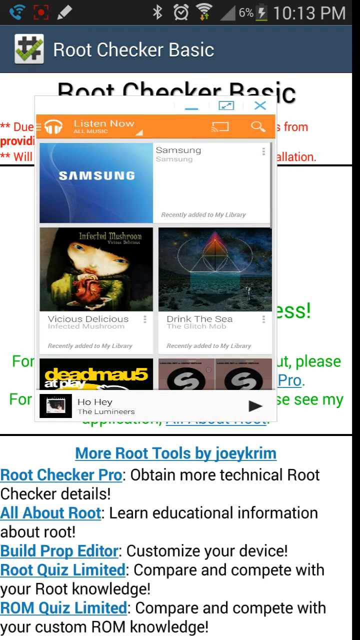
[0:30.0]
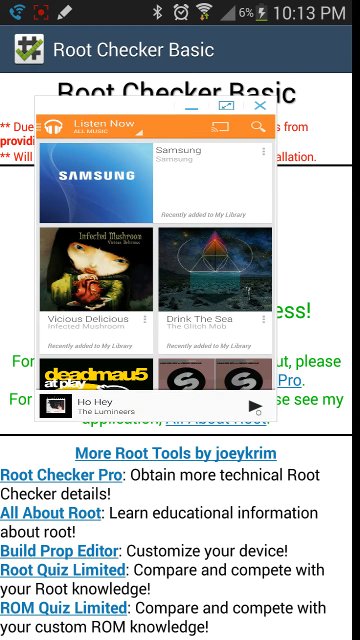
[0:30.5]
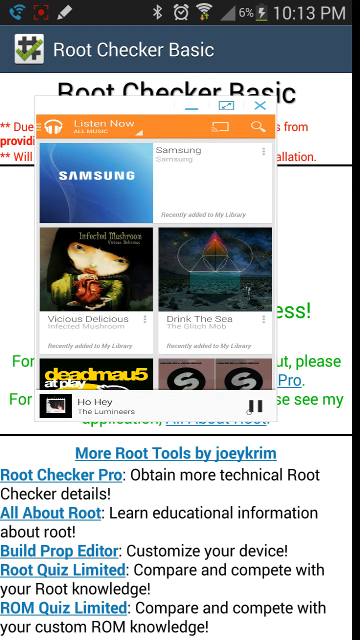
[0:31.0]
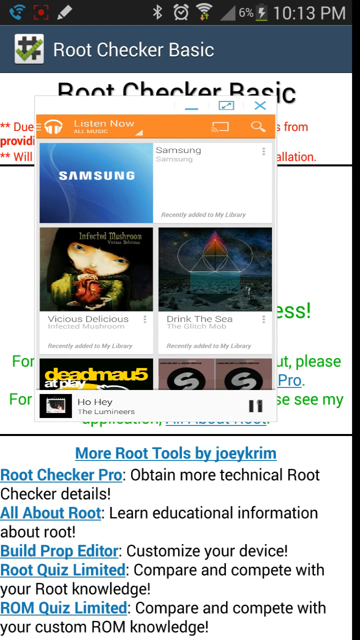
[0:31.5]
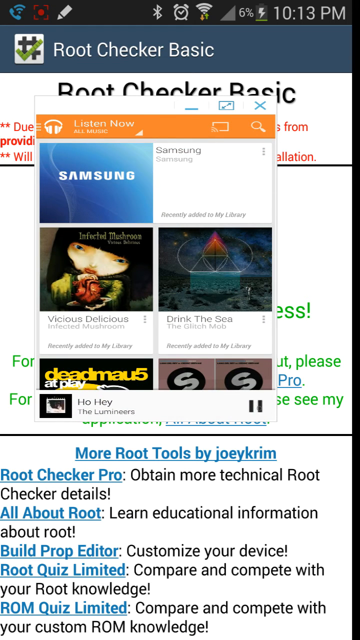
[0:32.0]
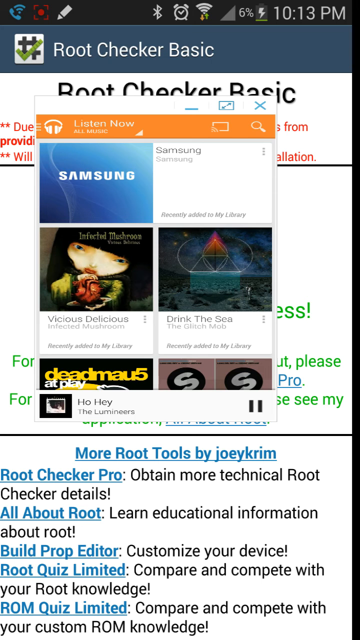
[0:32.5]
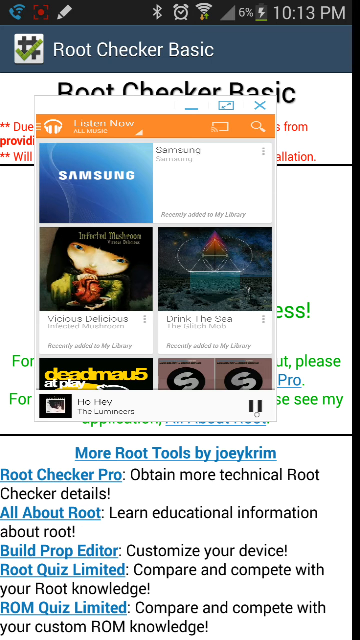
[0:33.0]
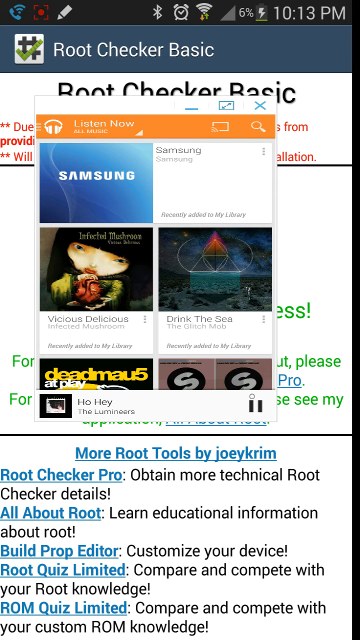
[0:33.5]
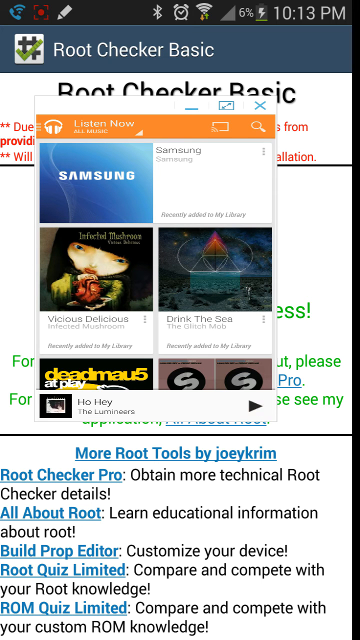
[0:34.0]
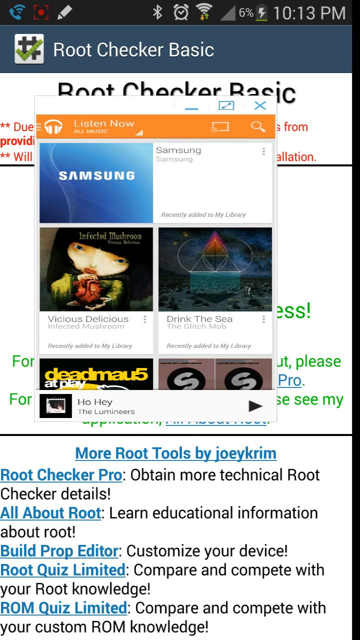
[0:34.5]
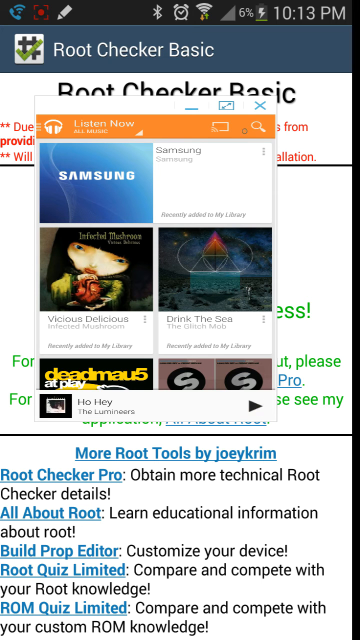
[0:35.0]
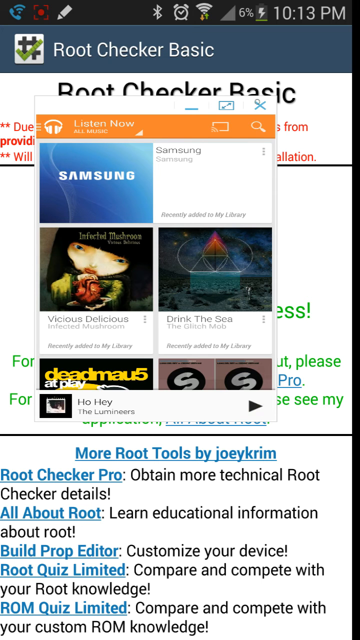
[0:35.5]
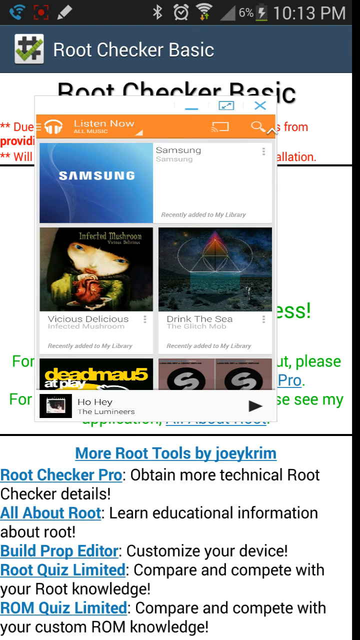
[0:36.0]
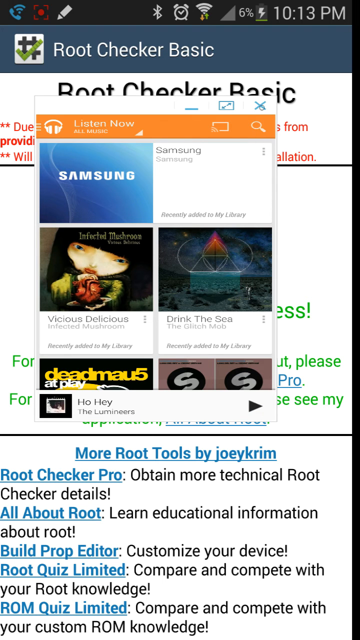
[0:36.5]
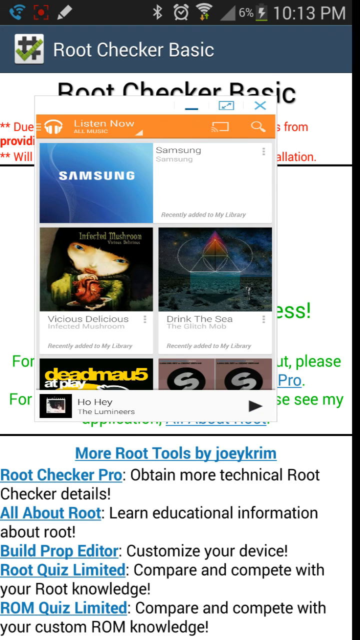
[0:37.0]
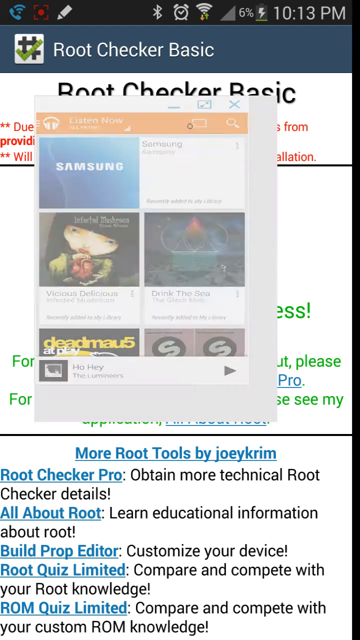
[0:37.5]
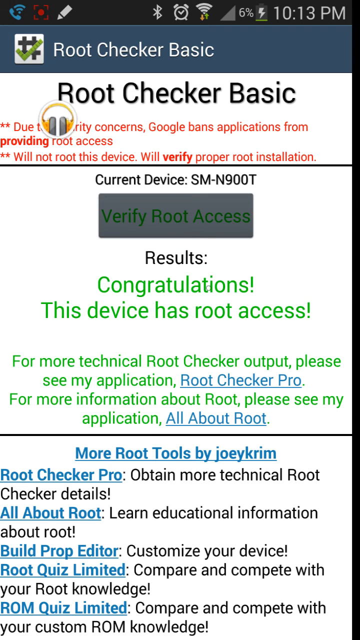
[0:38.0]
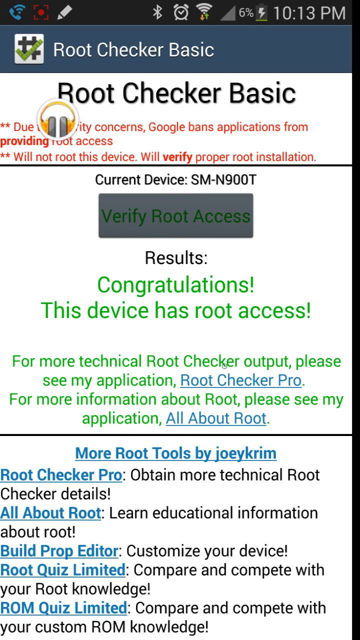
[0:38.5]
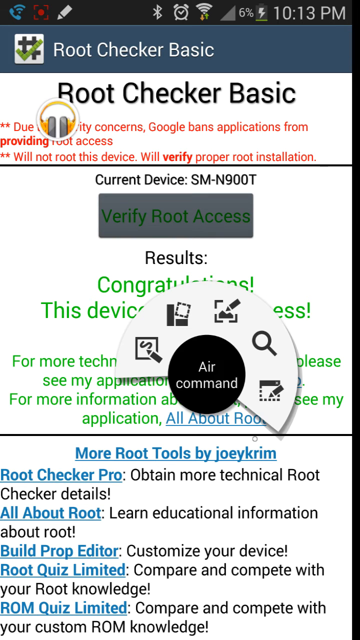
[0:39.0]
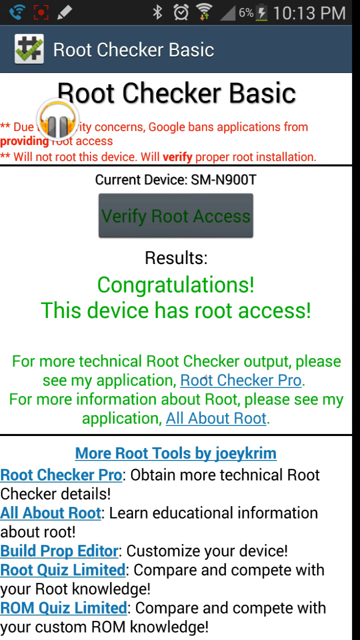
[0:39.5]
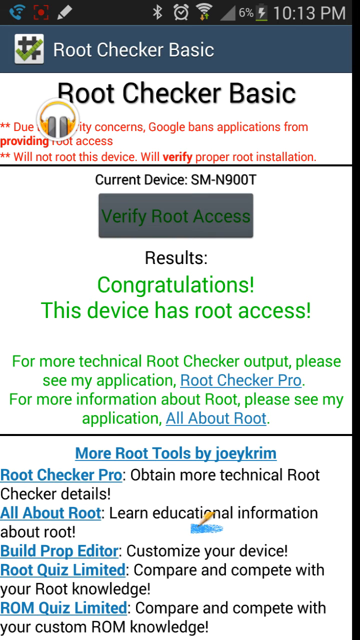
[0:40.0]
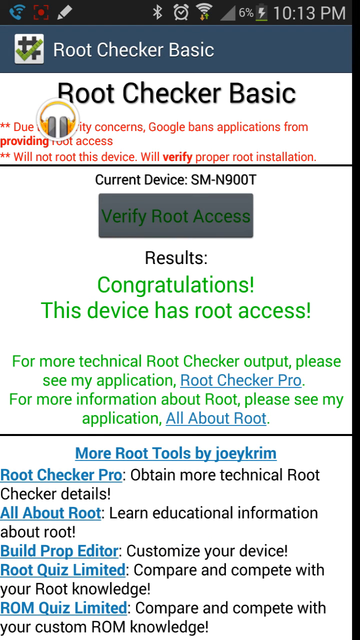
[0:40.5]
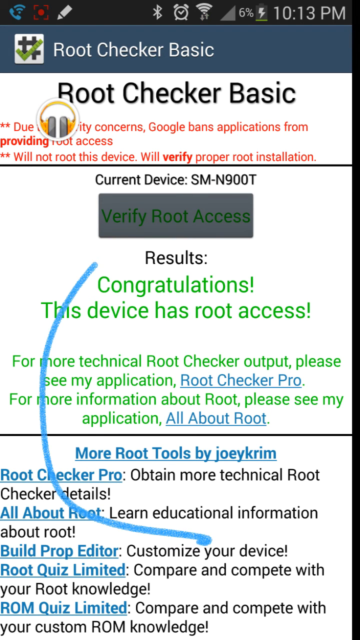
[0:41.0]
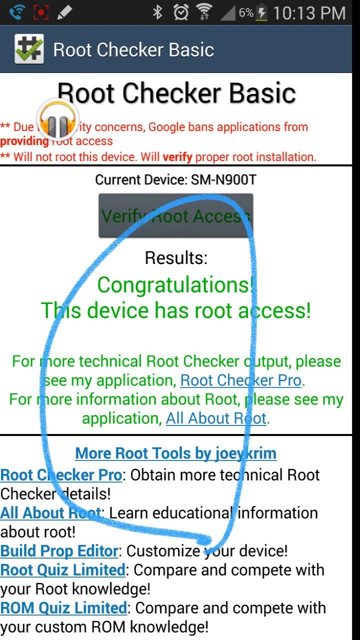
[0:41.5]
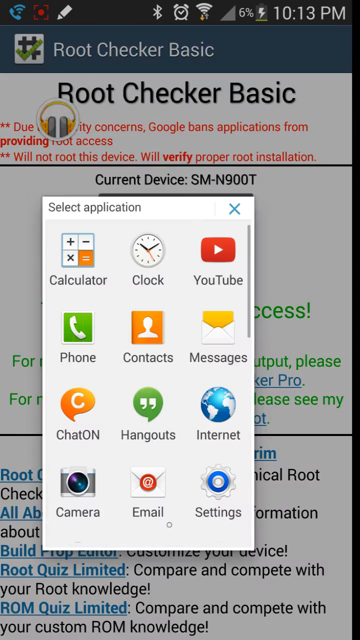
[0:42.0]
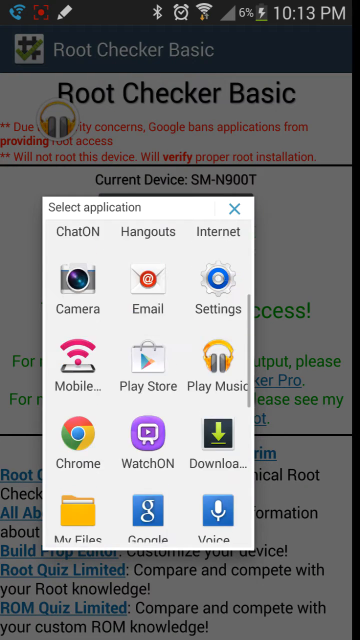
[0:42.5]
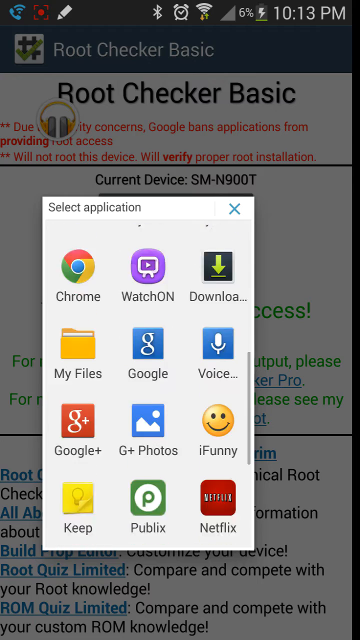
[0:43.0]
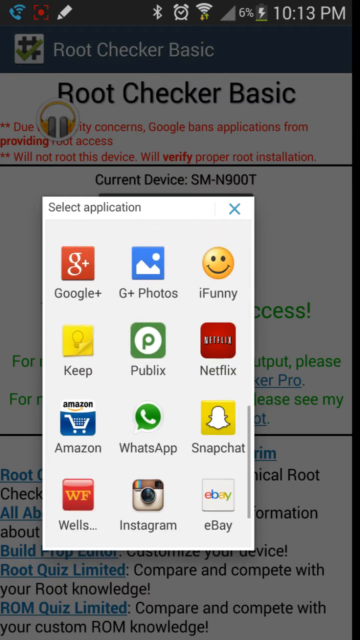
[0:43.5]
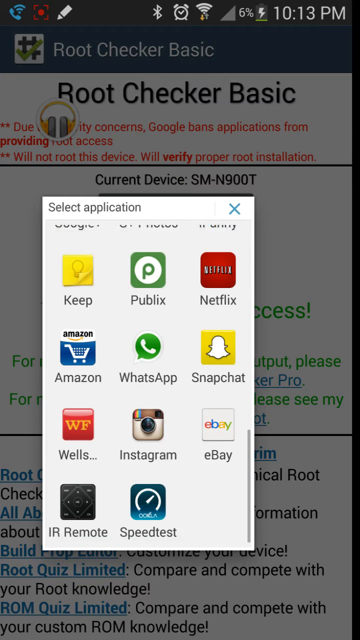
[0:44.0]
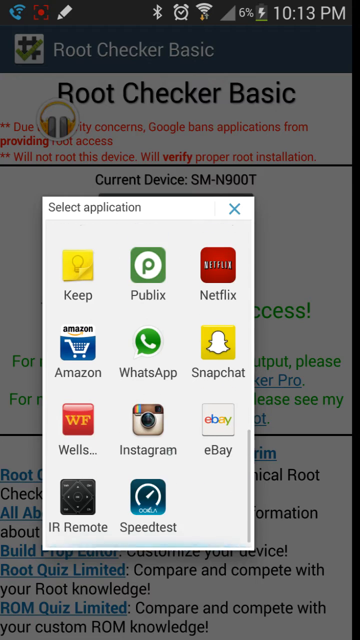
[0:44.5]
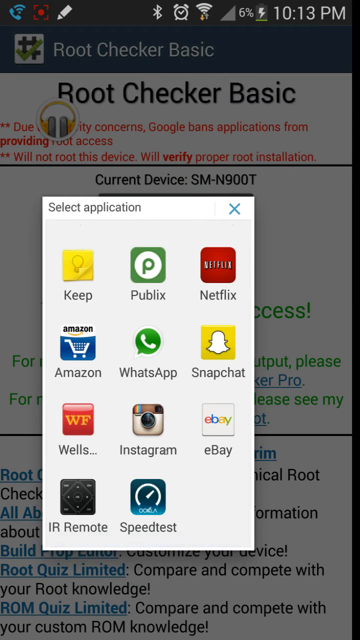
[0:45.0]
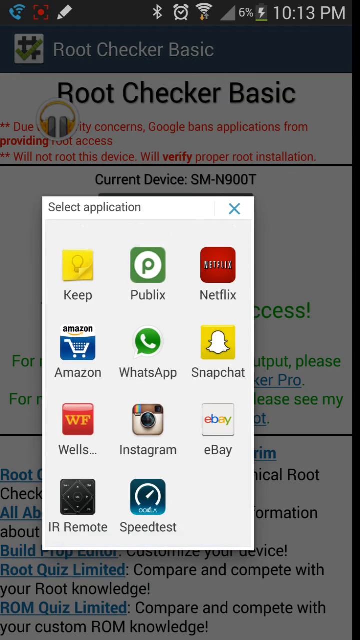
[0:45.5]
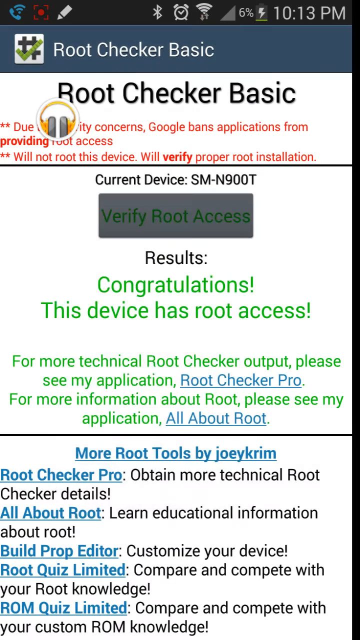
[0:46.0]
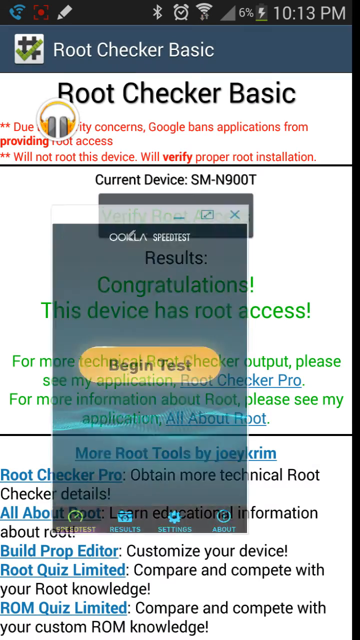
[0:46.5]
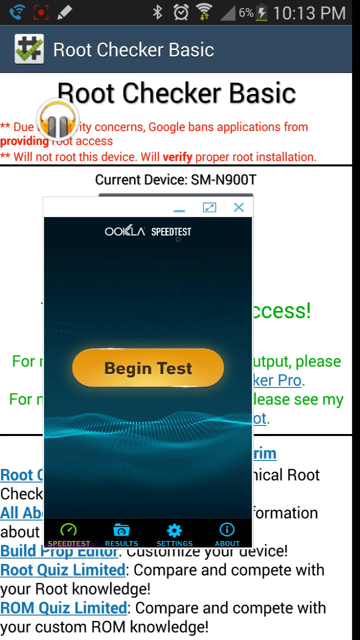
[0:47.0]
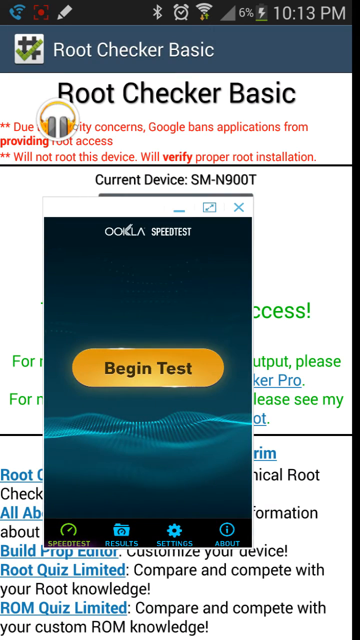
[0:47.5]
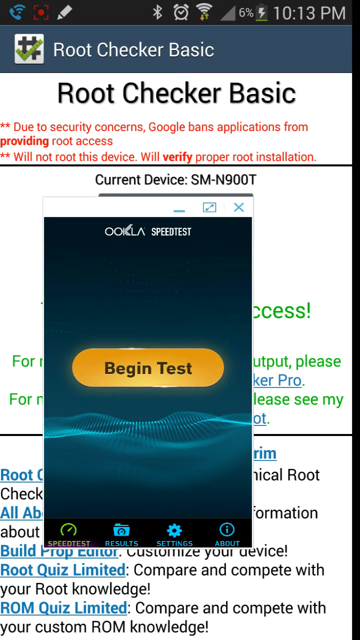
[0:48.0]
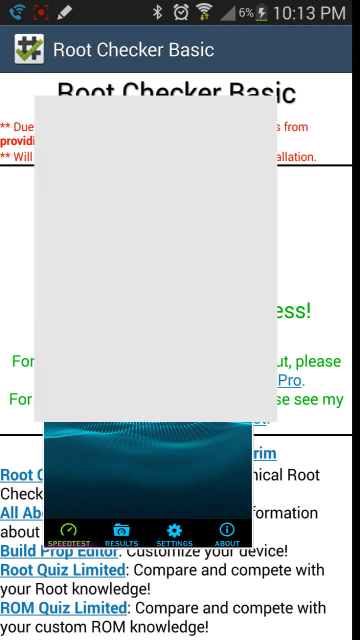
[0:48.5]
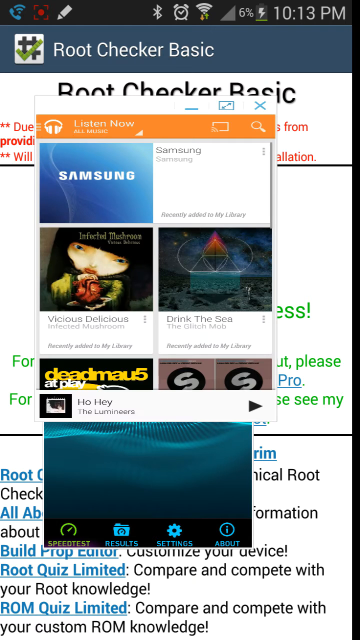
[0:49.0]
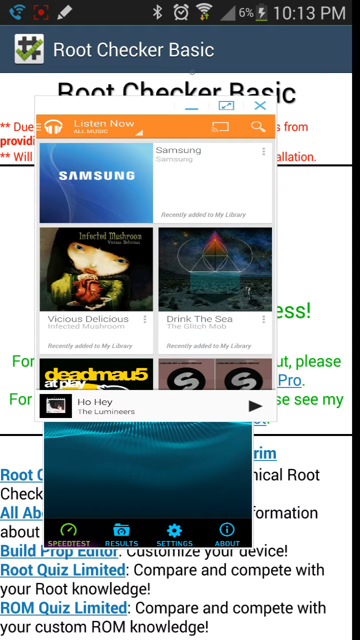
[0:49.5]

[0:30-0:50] After the root access confirmation, a small window reading "Listen Now," which seems to contain various music albums, appears in the center of the app; it is unclear whether it is an ad or another app running in the background. The user appears to be listening to a song, pauses it, explores the buttons a little, and minimizes the window. He then chooses a drawing option on the phone that lets him draw lines as in a paint program and circles a section in the Root Checker Basic app, possibly indicating the green Congratulations message. Next he opens a "Select Application" section and chooses Speed Test, an app for measuring internet speed.